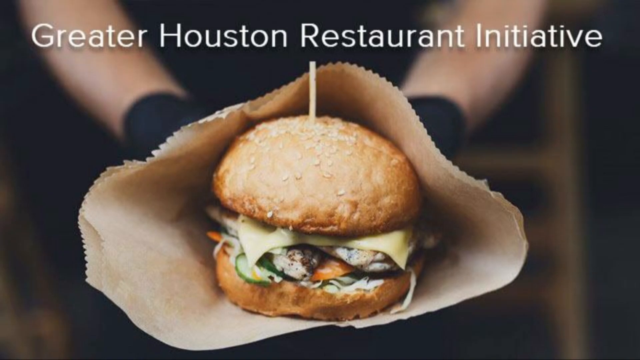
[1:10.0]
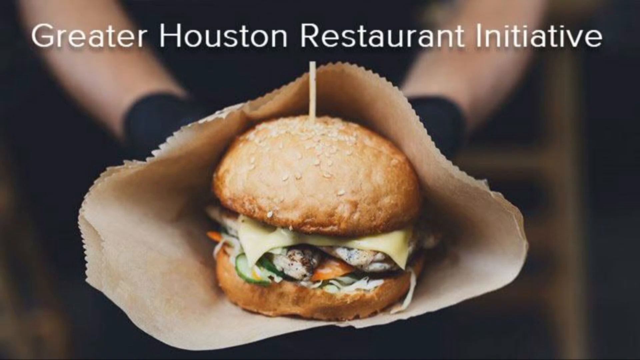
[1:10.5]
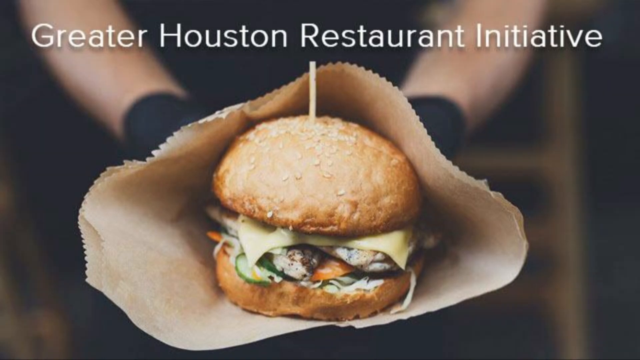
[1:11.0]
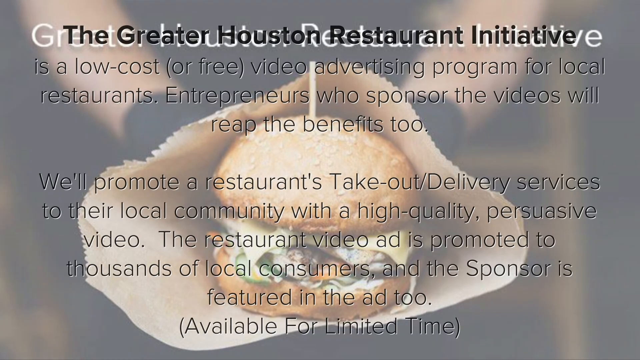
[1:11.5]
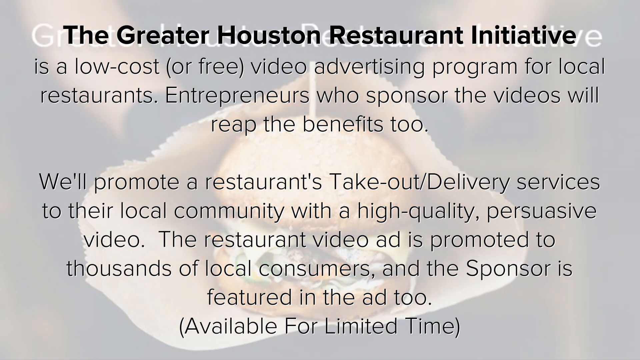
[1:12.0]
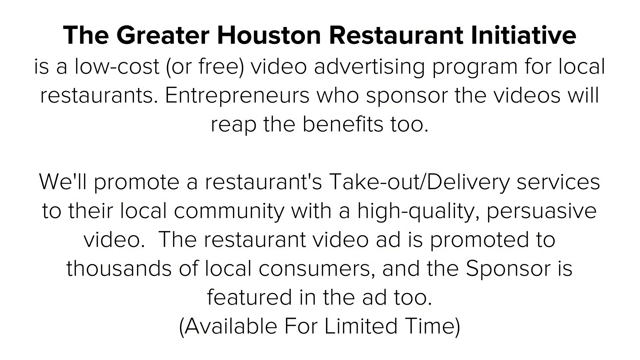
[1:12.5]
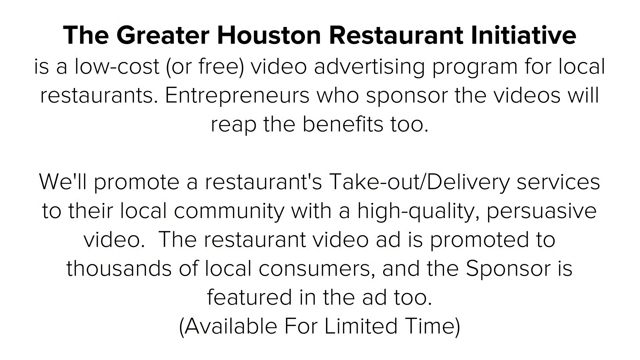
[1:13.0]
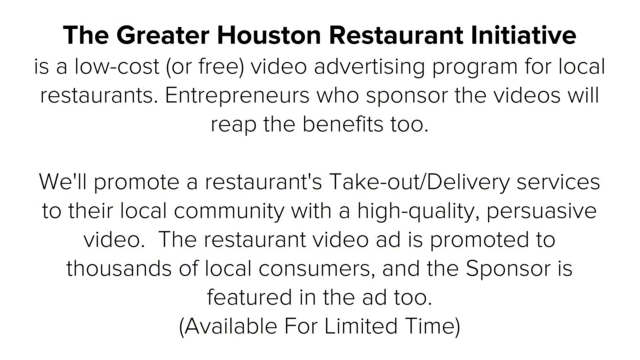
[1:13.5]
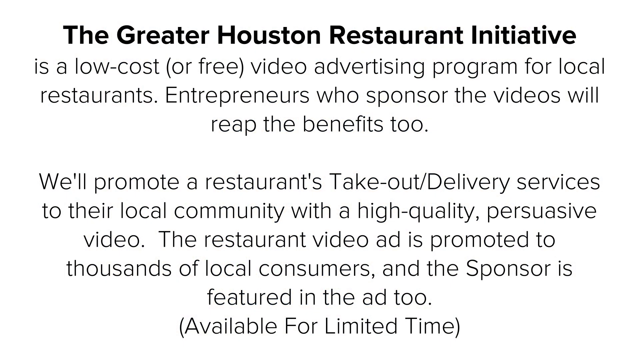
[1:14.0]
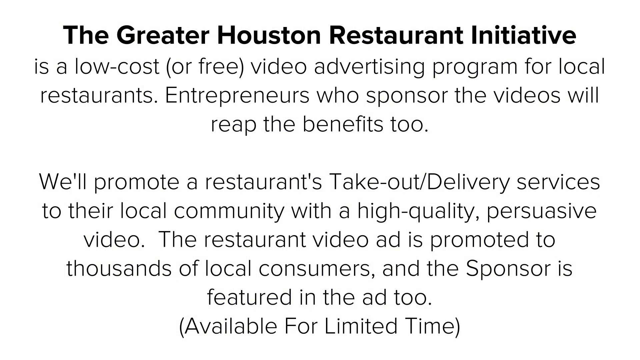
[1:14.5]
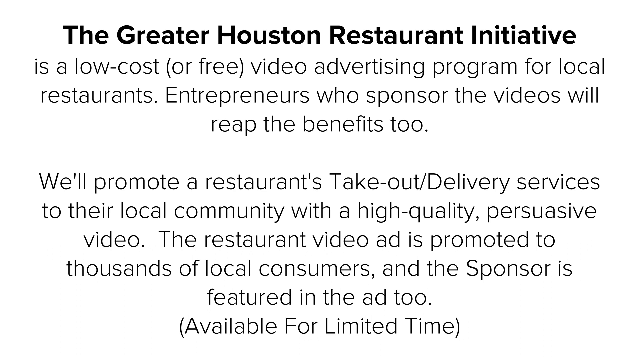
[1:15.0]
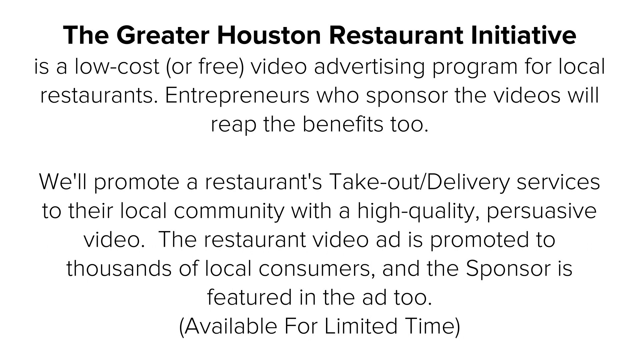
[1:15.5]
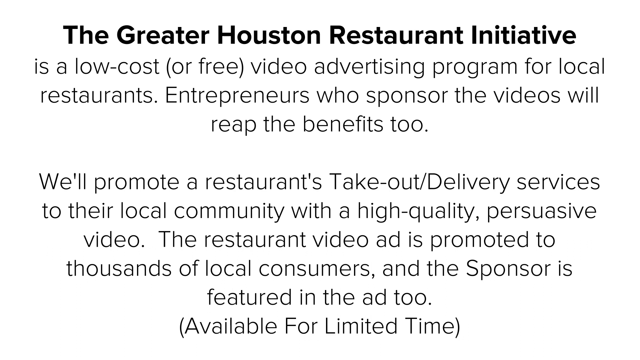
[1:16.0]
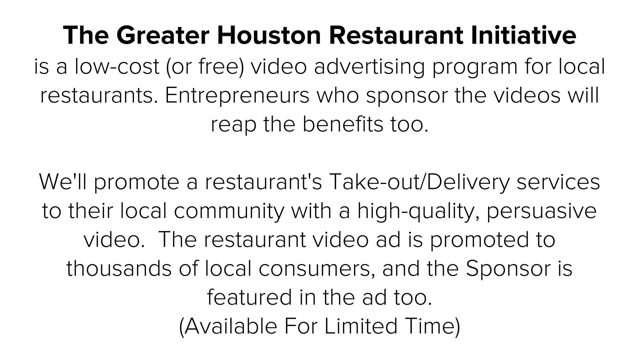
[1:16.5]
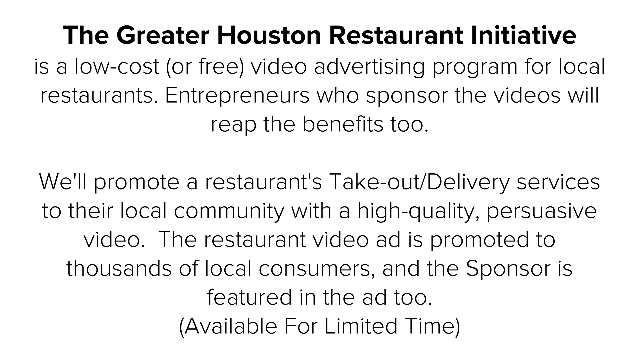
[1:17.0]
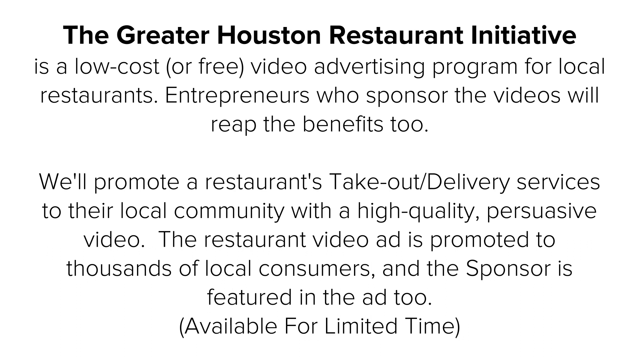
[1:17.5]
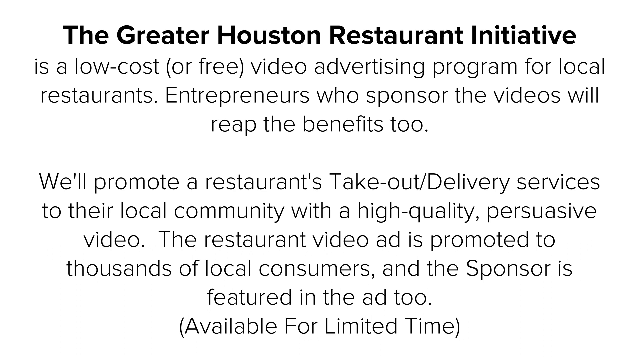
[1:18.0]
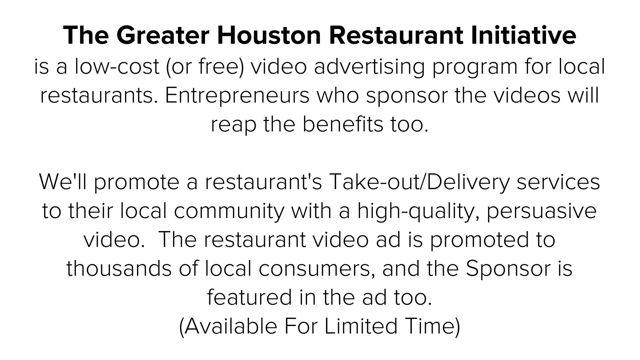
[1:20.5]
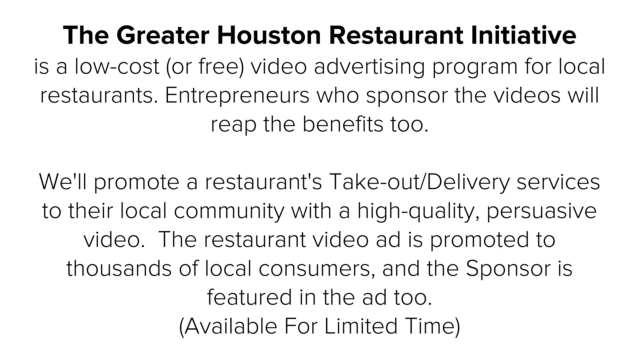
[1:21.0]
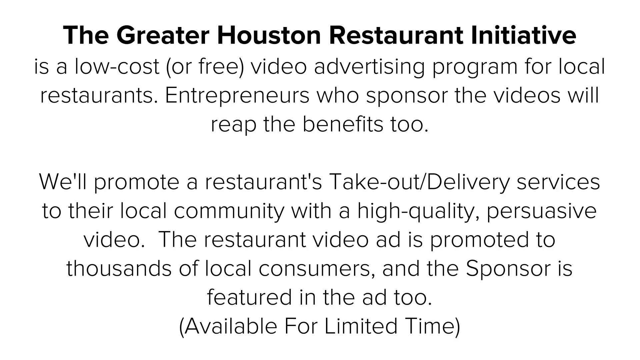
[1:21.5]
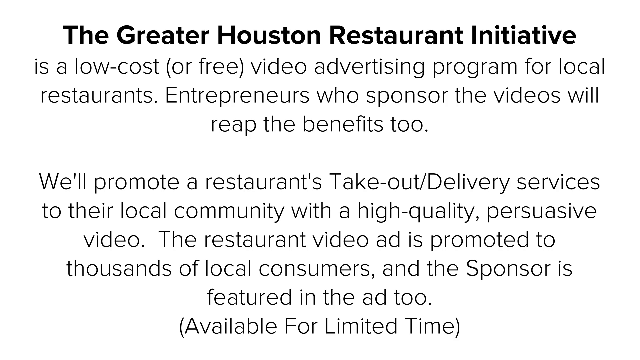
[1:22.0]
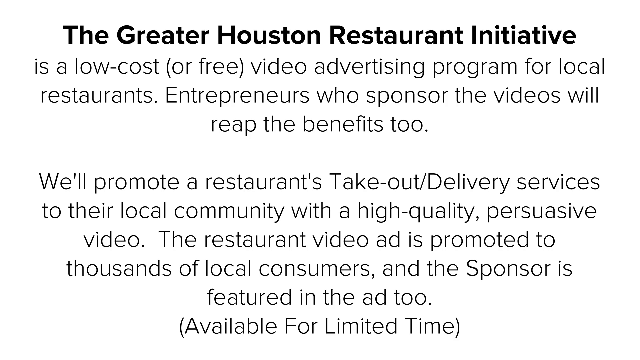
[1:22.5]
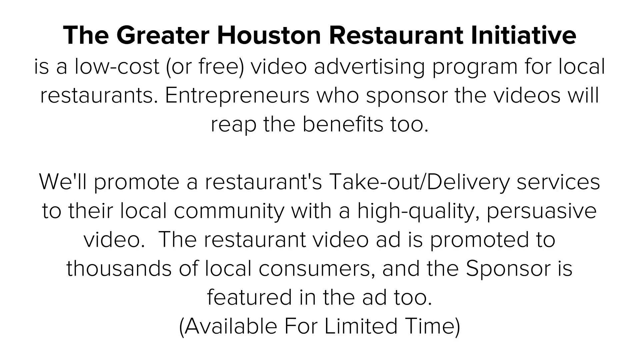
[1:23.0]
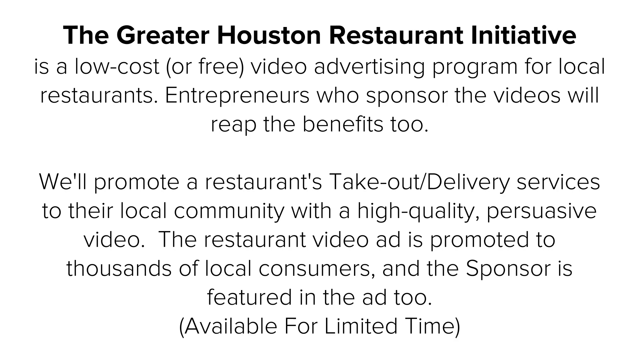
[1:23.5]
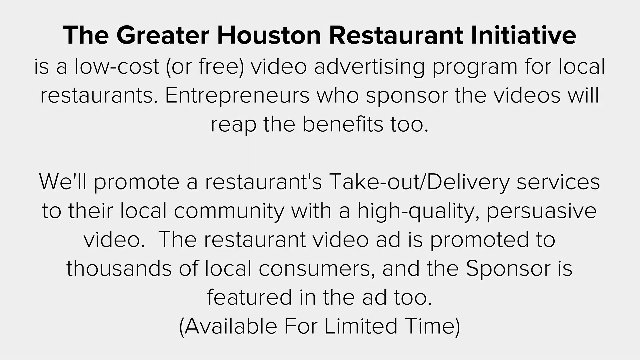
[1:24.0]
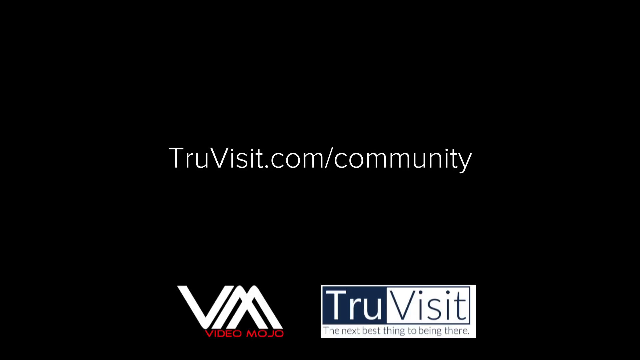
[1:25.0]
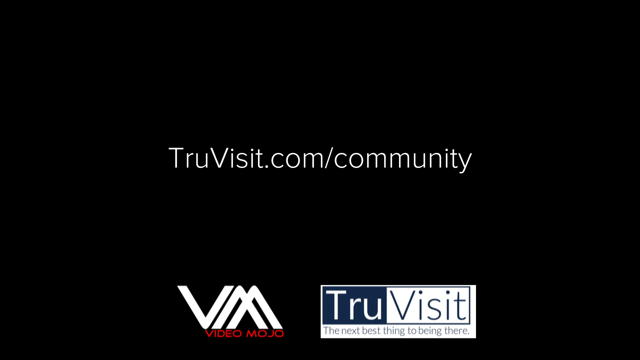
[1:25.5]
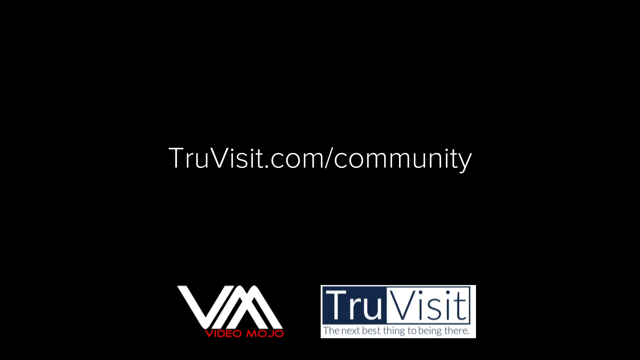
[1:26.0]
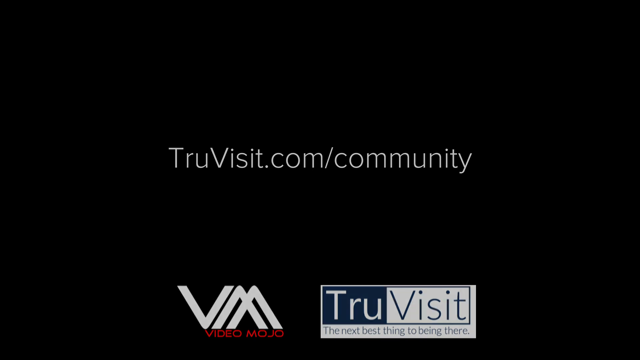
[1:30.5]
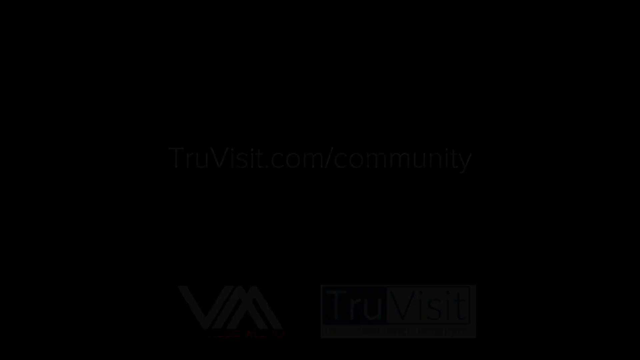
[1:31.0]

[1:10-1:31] The screen reads "Greater Houston Restaurant Initiative" as a person holds a sandwich in what looks like brown paper. It appears to be on some type of brown seeded roll with melted cheese, with vegetables visible: mushrooms, possibly cucumbers, and maybe tomatoes and carrots. The two hands holding the sandwich wear black protective gloves. The next screen reads "the Greater Houston Restaurant Initiative is a low cost or free video and advertising program for local restaurants. Entrepreneurs who sponsor the videos will reap the benefits too. We'll promote a restaurant's takeout delivery services to their local community with a high quality persuasive video. The restaurant video ad is promoted to thousands of local customers and the sponsor is featured in the ad too. available for a limited time." It then reads "truevisit.com, community."